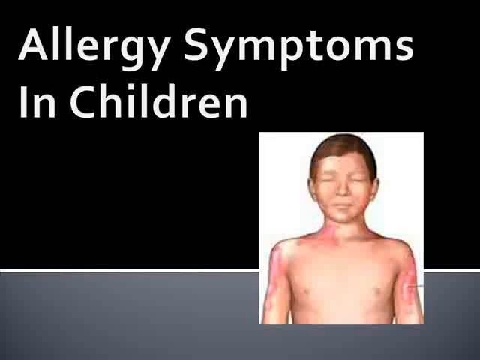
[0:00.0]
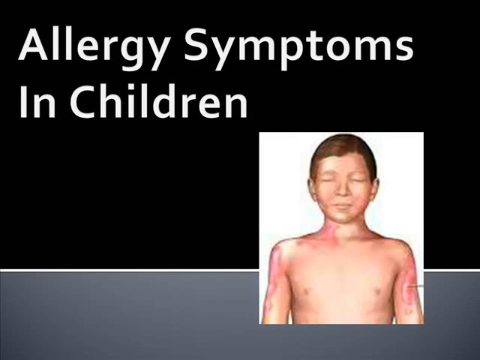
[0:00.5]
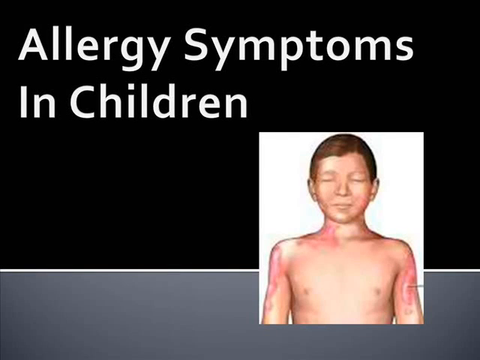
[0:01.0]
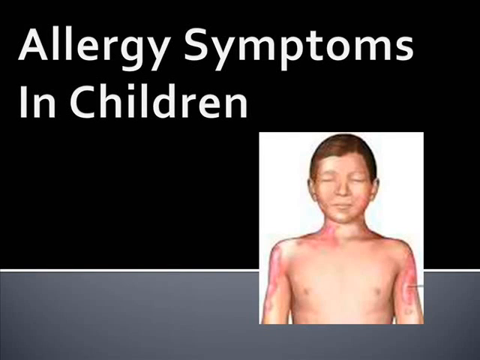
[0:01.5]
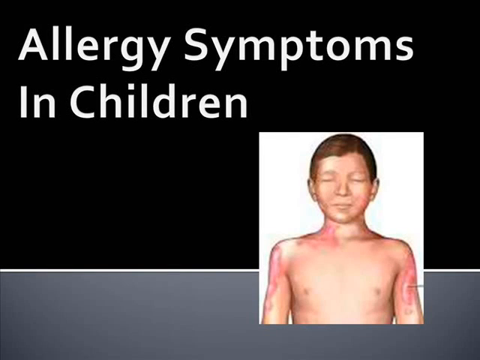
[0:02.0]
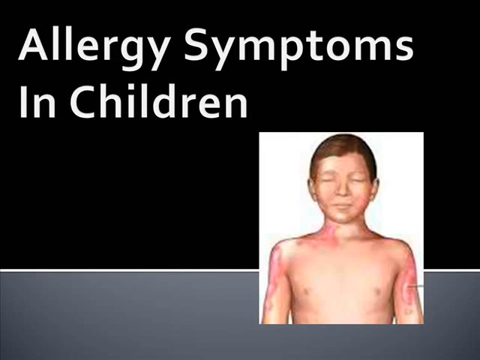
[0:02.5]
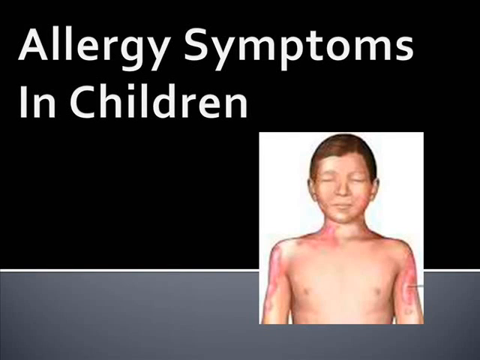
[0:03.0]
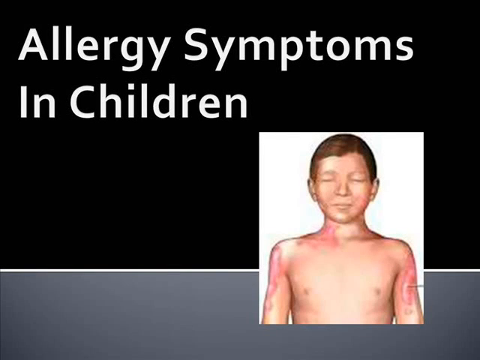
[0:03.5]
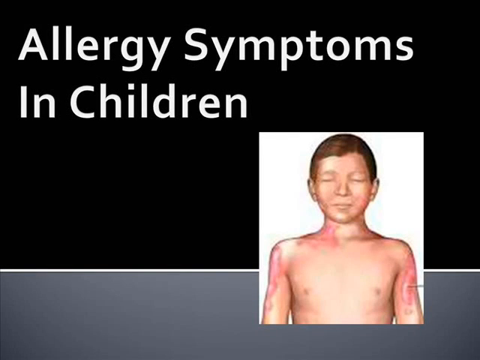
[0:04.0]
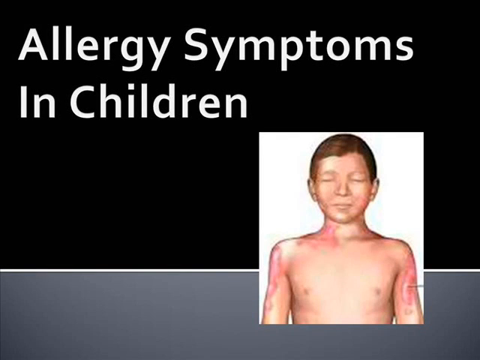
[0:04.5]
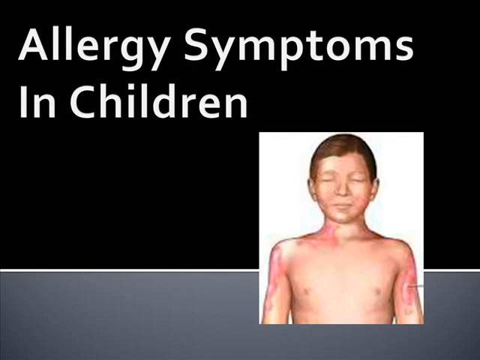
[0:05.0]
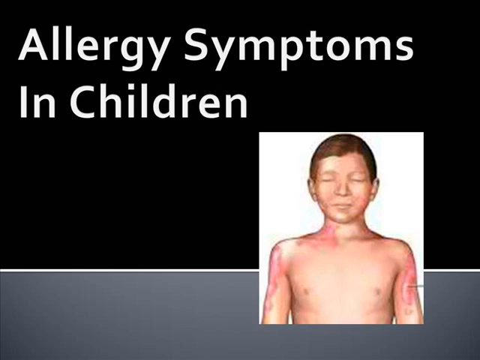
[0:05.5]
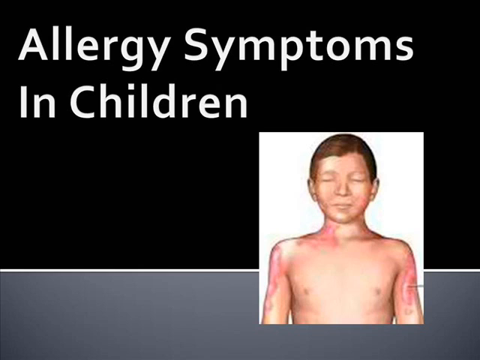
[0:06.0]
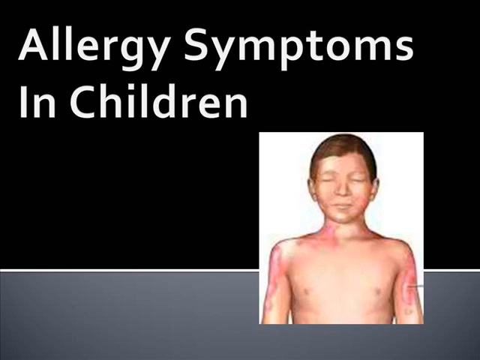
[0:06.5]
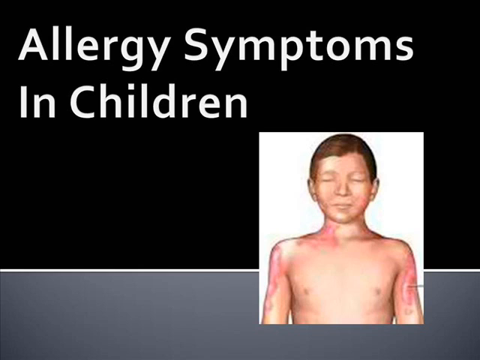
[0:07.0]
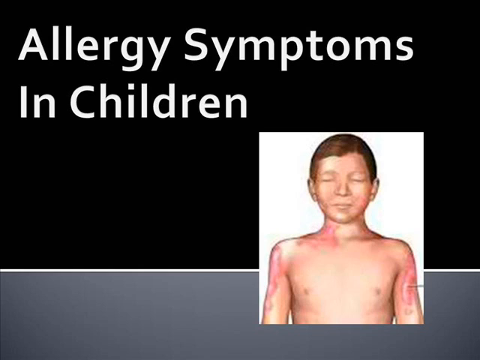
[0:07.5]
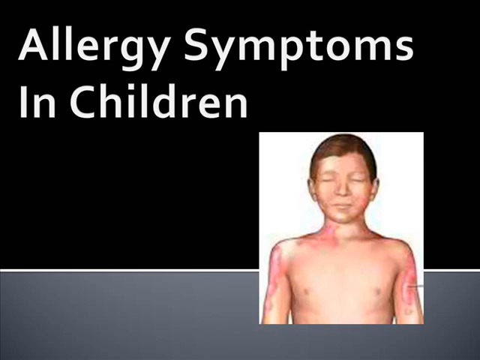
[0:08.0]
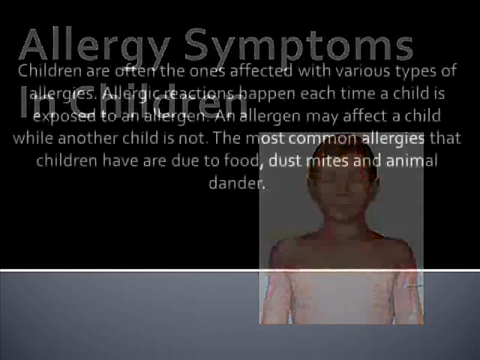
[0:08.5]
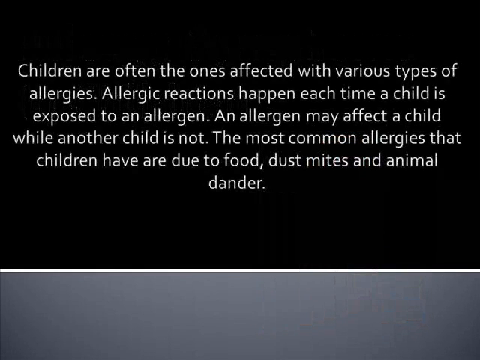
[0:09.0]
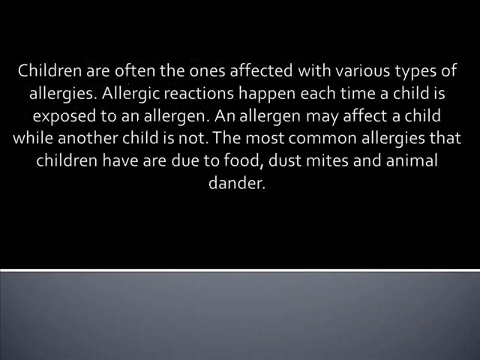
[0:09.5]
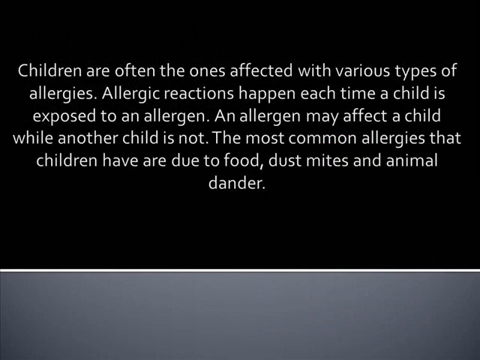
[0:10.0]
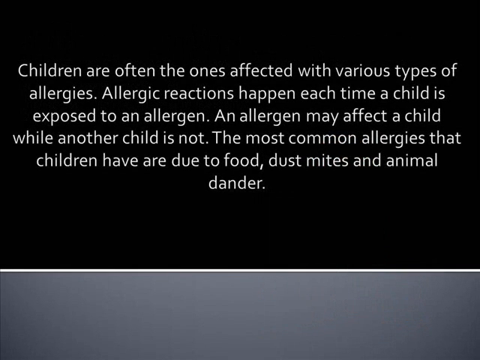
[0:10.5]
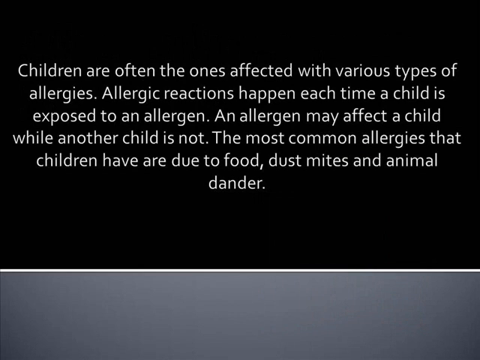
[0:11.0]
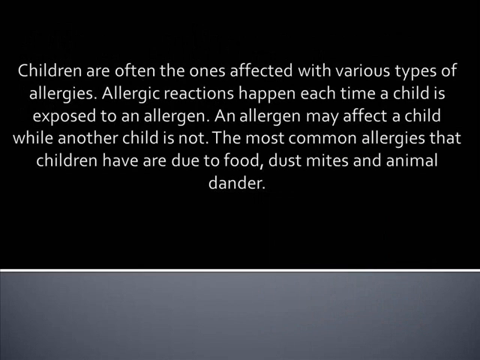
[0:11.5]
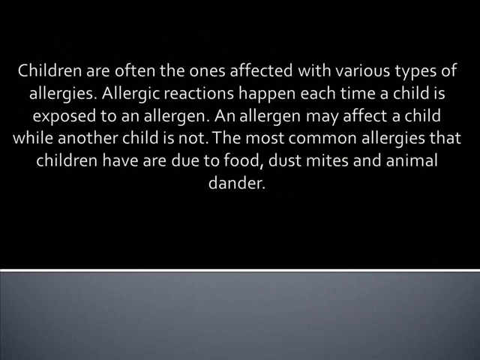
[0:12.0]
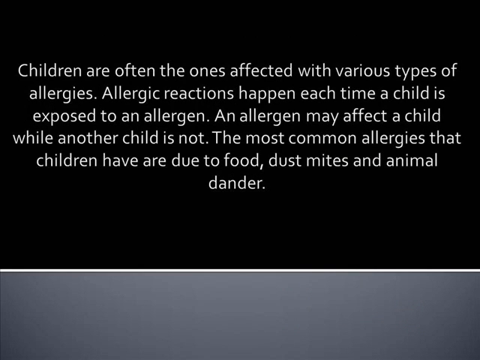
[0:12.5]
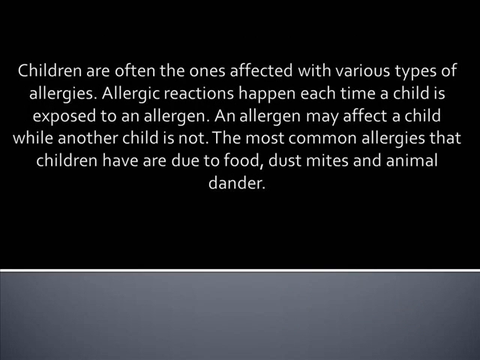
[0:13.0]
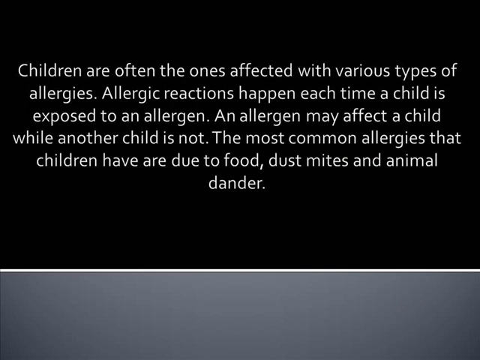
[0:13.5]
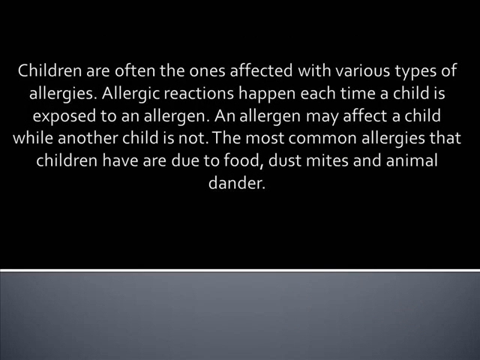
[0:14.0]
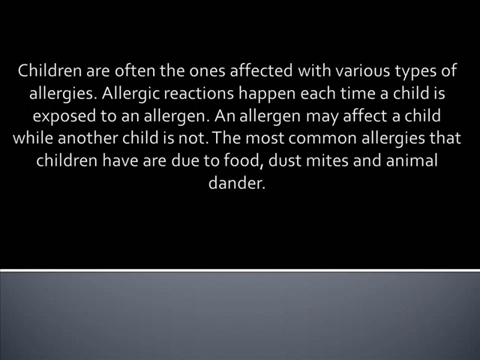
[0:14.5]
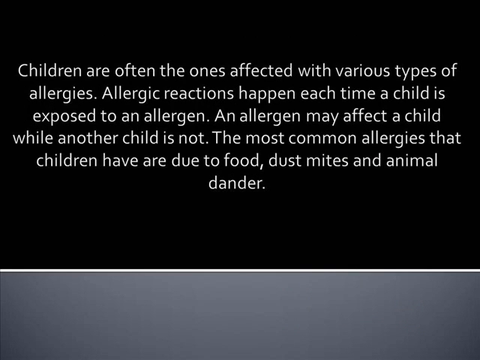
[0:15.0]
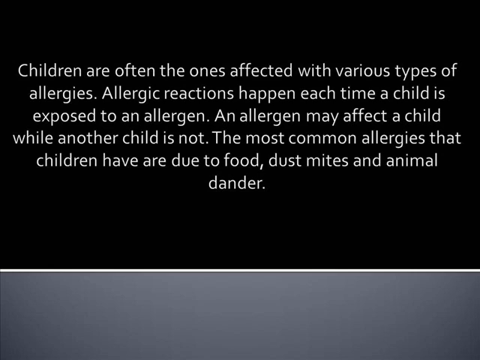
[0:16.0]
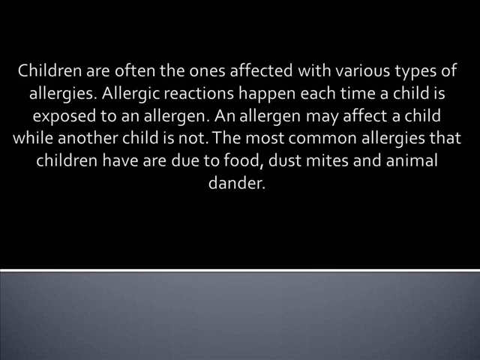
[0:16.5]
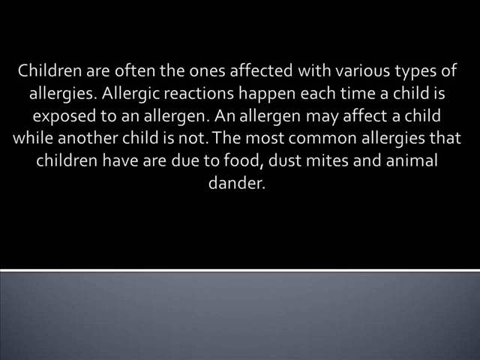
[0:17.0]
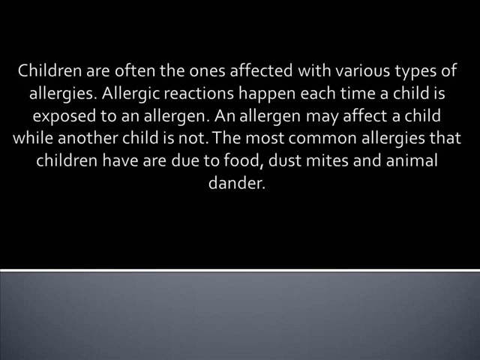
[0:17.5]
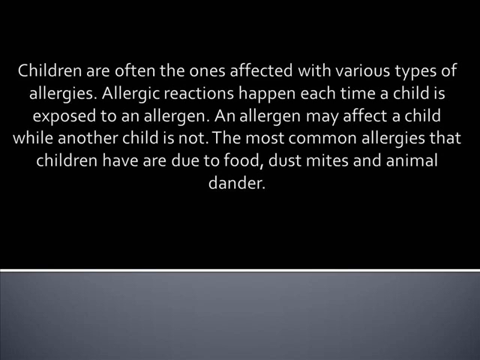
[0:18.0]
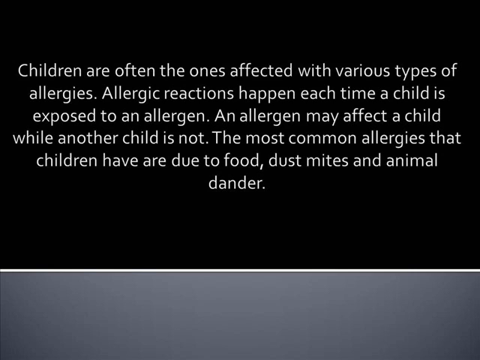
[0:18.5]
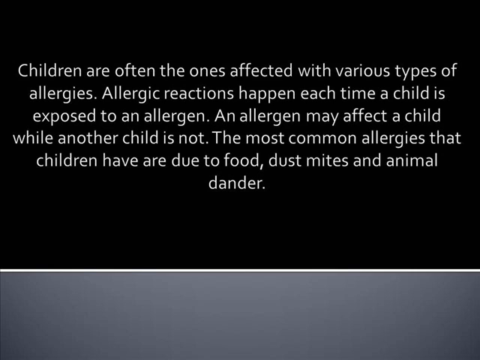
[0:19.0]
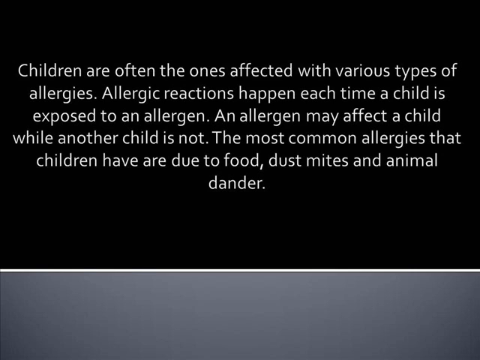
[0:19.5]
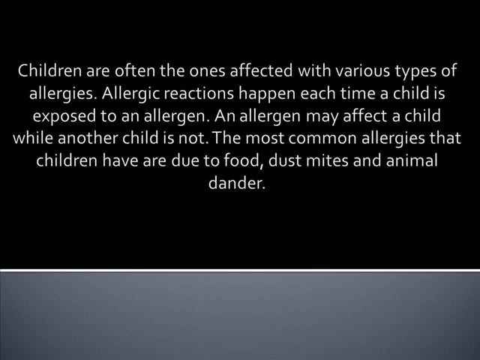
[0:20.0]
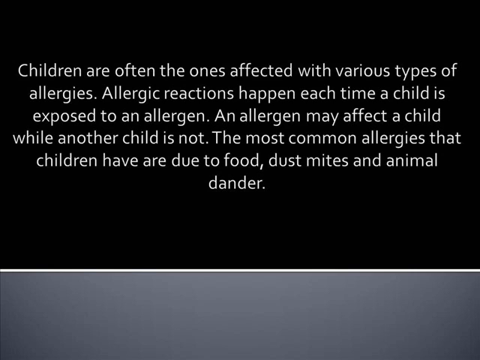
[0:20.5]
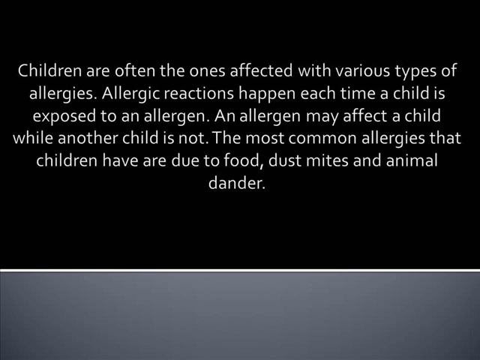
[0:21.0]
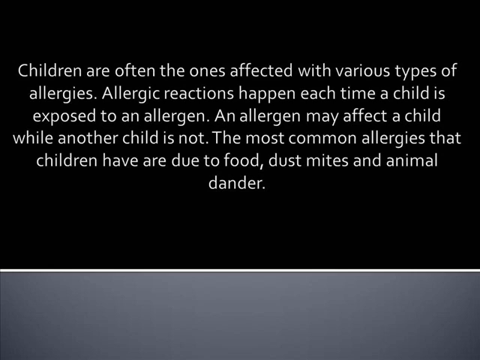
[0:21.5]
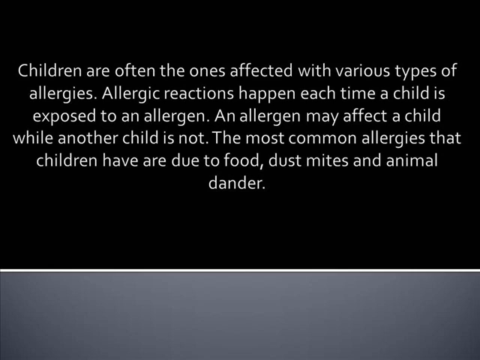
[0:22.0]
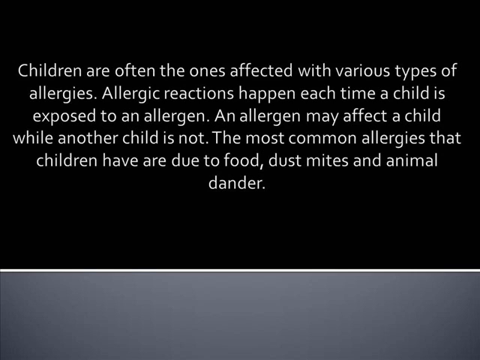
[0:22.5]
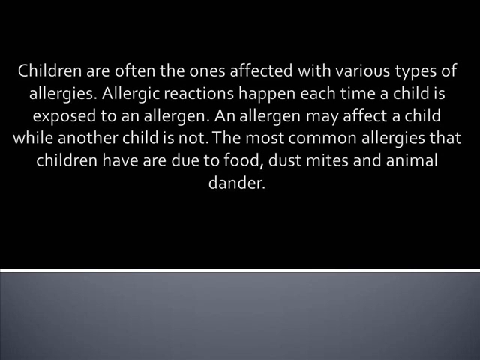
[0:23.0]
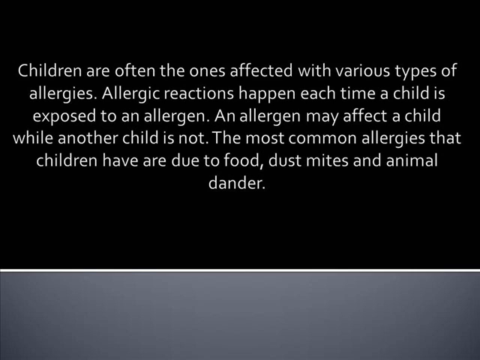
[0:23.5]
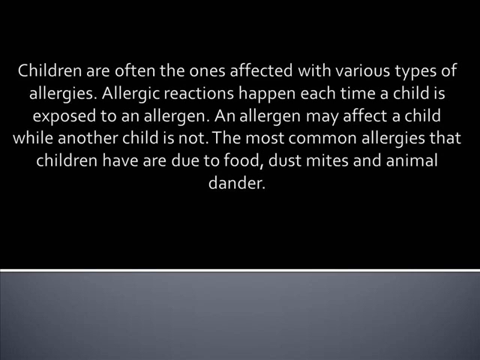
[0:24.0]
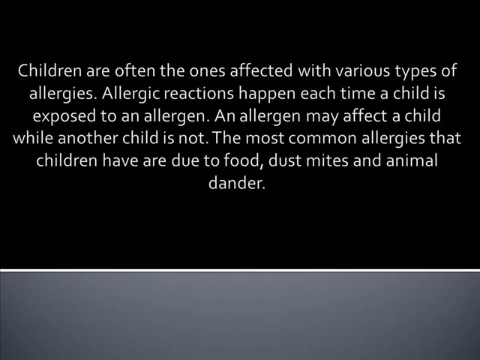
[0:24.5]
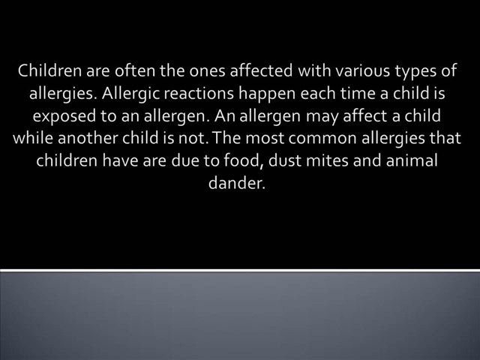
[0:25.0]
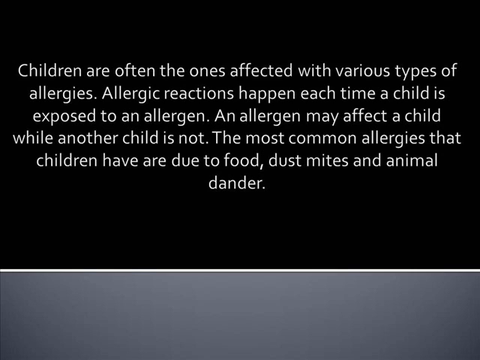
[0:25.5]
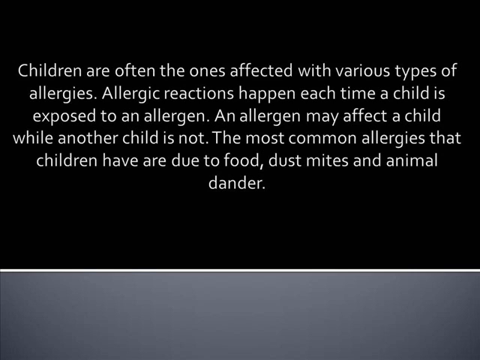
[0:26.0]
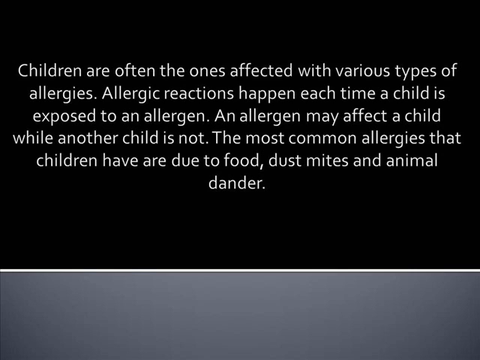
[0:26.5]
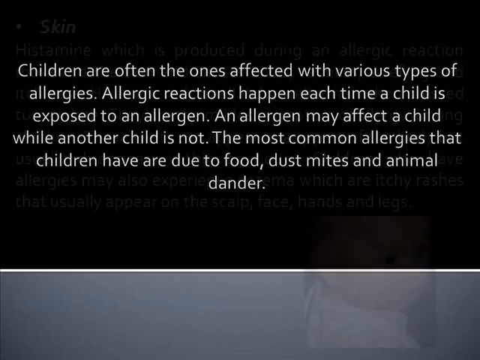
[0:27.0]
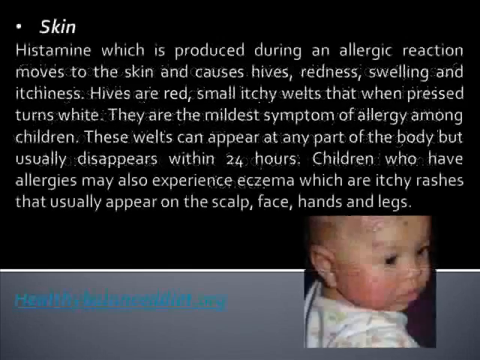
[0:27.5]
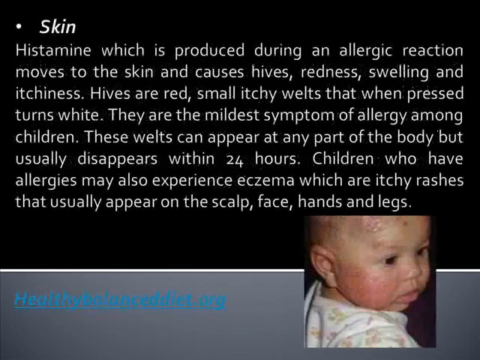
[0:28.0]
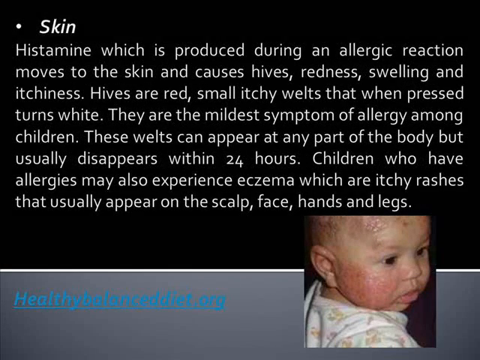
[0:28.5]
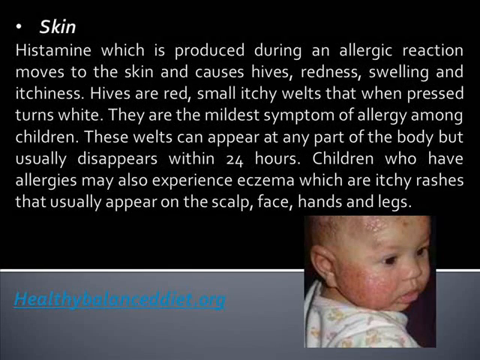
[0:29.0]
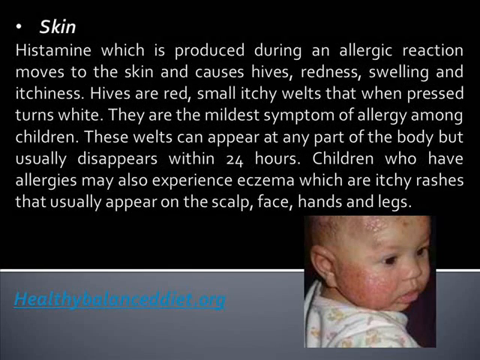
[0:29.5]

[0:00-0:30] The video opens with the title "Allergy Symptoms in Children" on two lines of white sans-serif text on a black background, with the first letter of each word capitalized. A gray banner runs across the bottom, separated from the black area by a thin white line. In the lower right is what looks like an illustration of a young boy, probably about 10 years old, with brown hair and closed eyes, on a white background. The graphic then shifts to text: the headline and the boy disappear, and white text reads, "Children are often the ones affected with various types of allergies. Allergic reactions happen each time a child is exposed to an allergen. An allergen may affect a child while another child is not. The most common allergies that children have are due to food, dust mites, and animal dander." The screen then switches to more text: "Histamine, which is produced during an allergic reaction, moves to the skin and causes hives, redness, swelling, and itchiness. Hives are red, small, itchy welts that when pressed turns white. They are the mildest symptoms of allergy among children. These welts can appear at any part of the body, but usually disappears within 24 hours. Children who have allergies may also experience eczema, which are itchy rashes that usually appear on the scalp, face, hands, and legs."